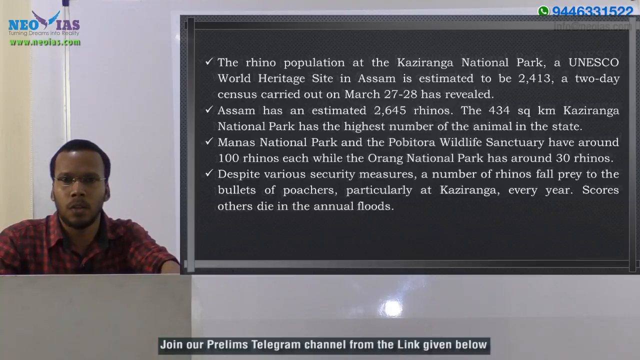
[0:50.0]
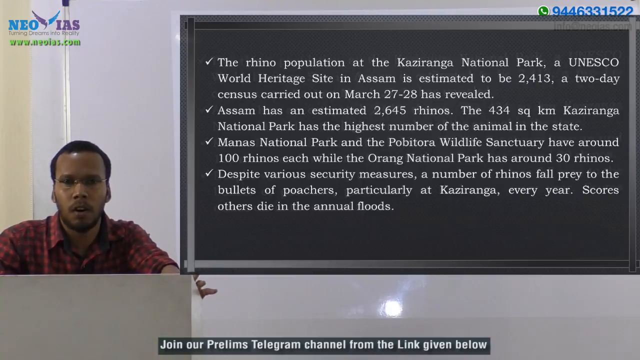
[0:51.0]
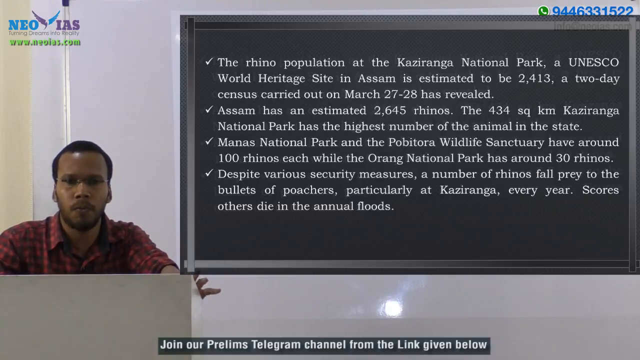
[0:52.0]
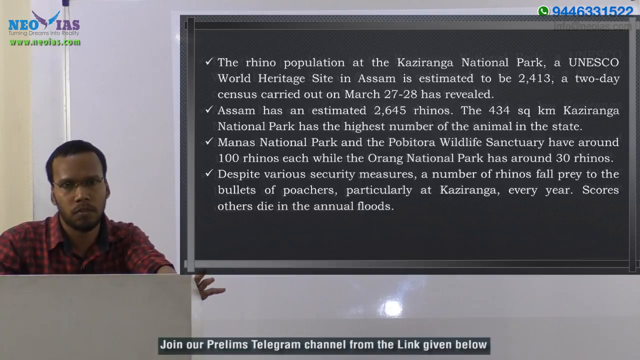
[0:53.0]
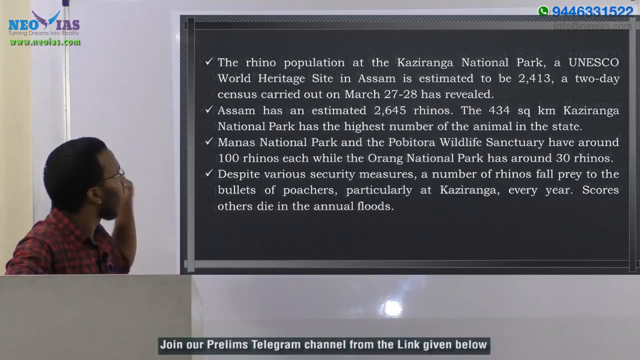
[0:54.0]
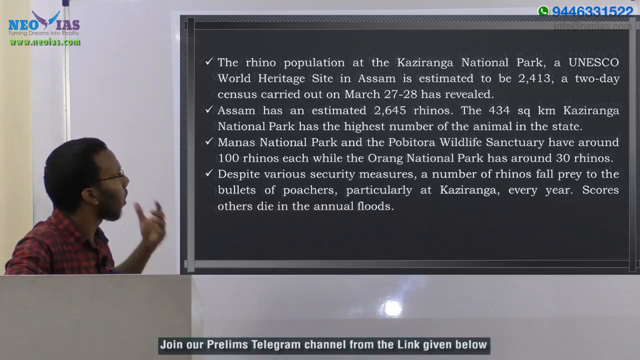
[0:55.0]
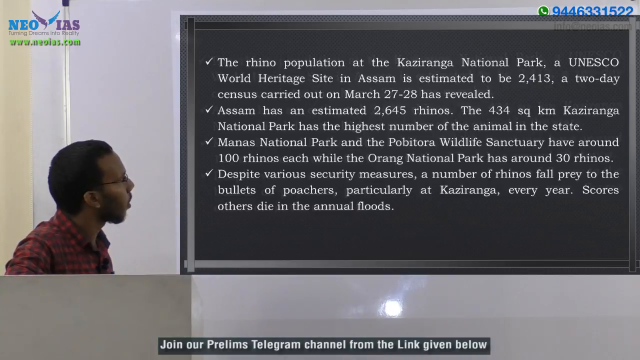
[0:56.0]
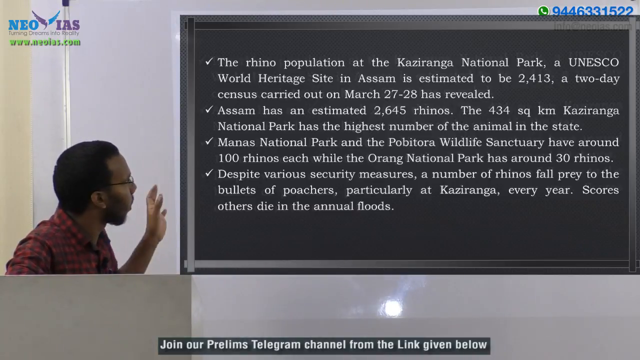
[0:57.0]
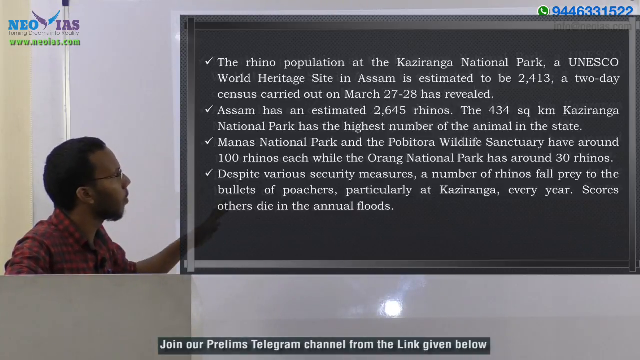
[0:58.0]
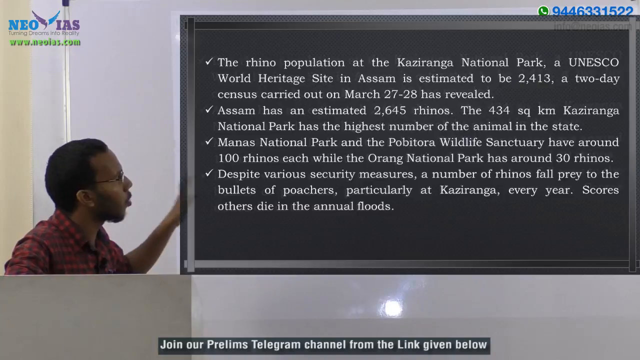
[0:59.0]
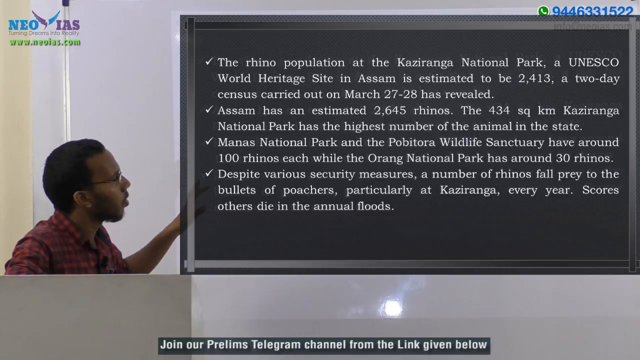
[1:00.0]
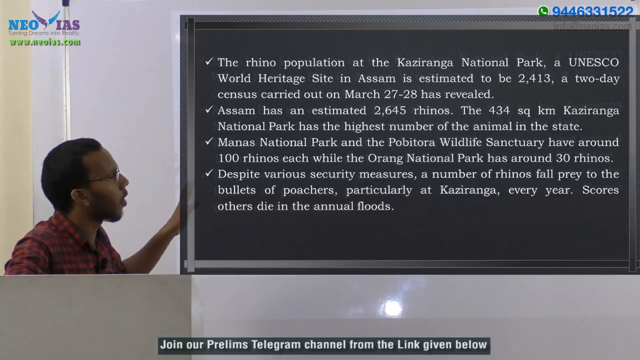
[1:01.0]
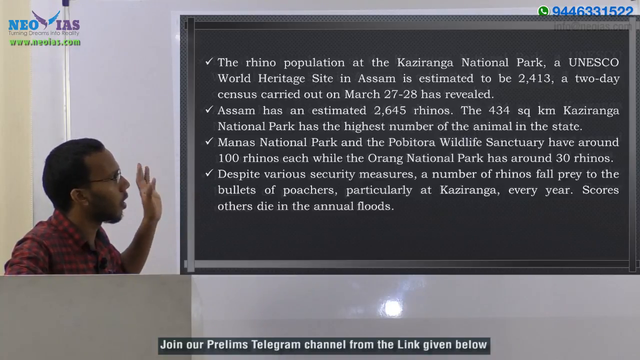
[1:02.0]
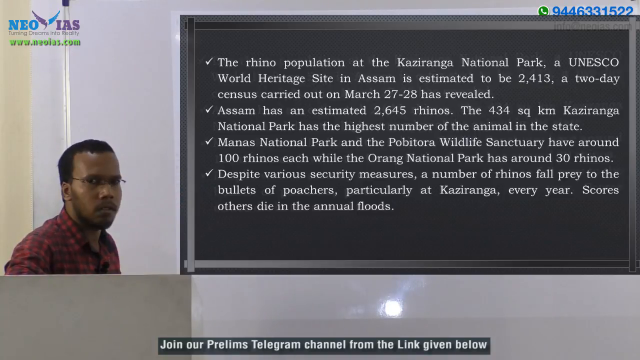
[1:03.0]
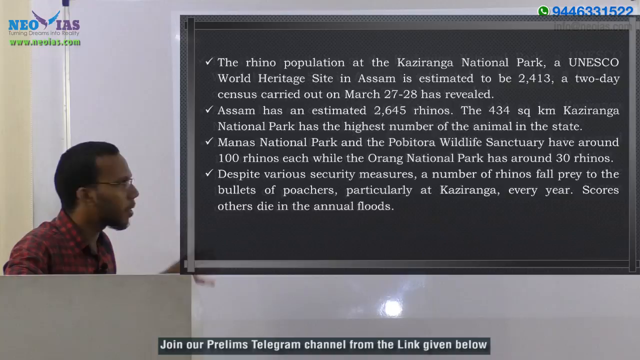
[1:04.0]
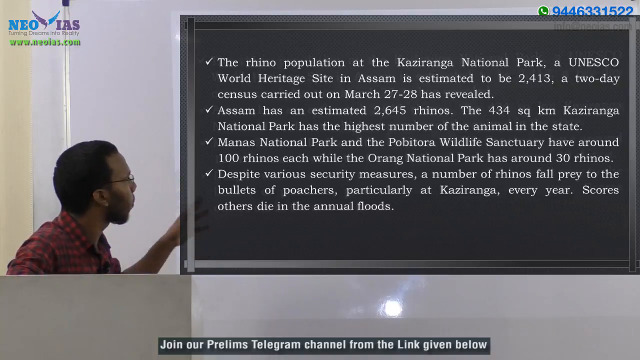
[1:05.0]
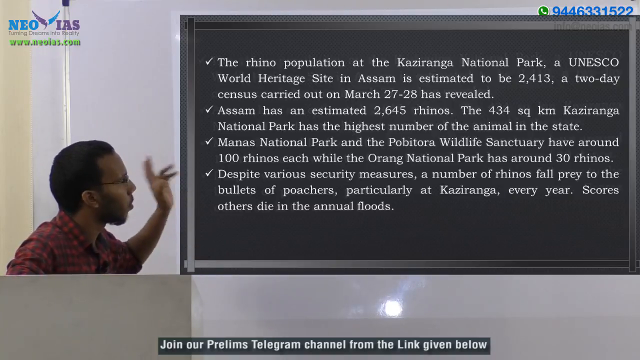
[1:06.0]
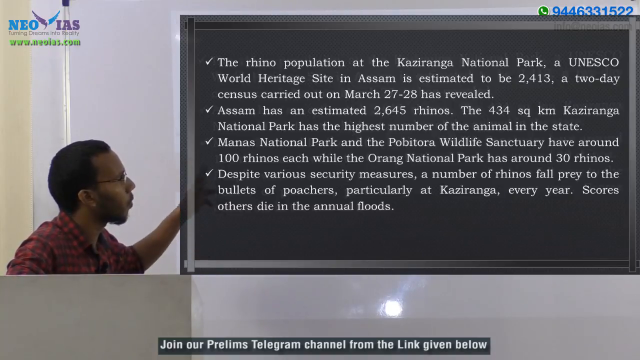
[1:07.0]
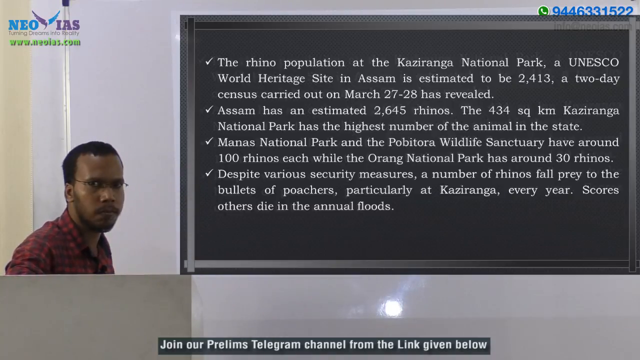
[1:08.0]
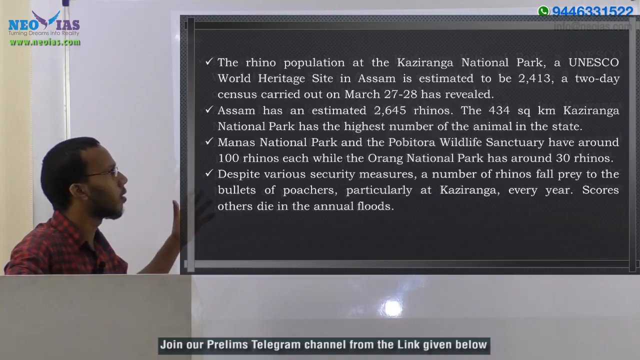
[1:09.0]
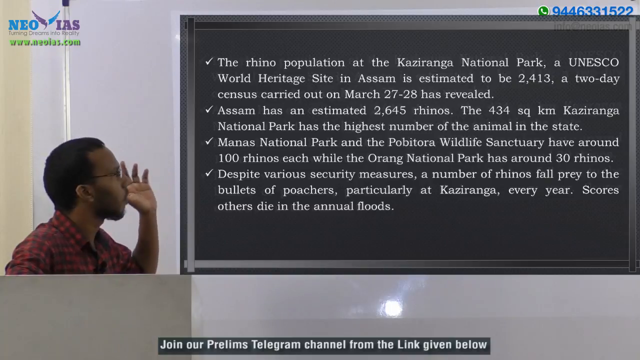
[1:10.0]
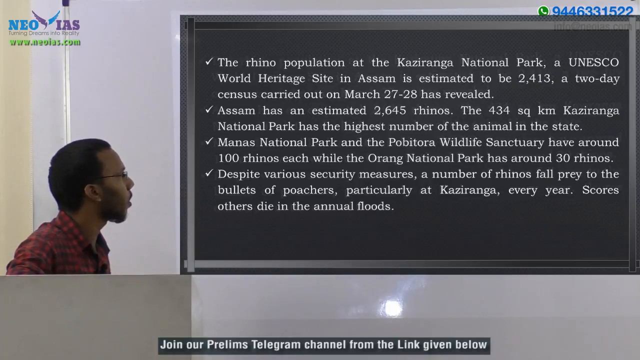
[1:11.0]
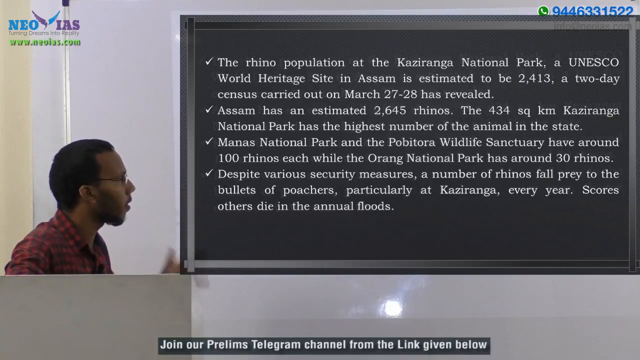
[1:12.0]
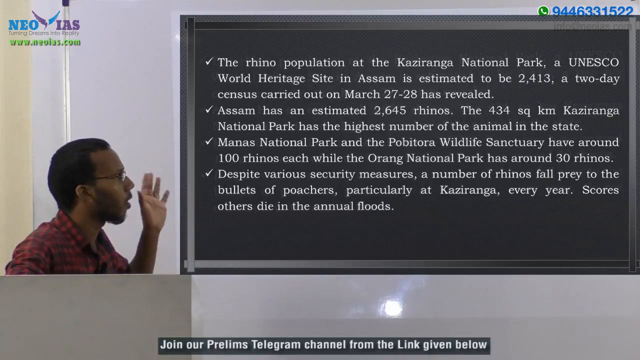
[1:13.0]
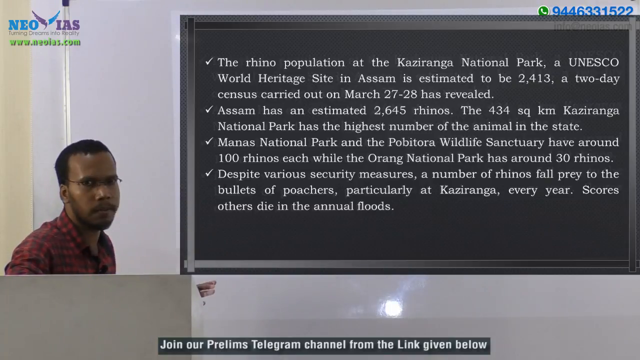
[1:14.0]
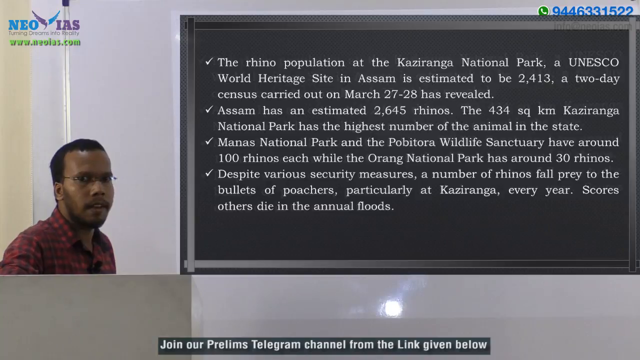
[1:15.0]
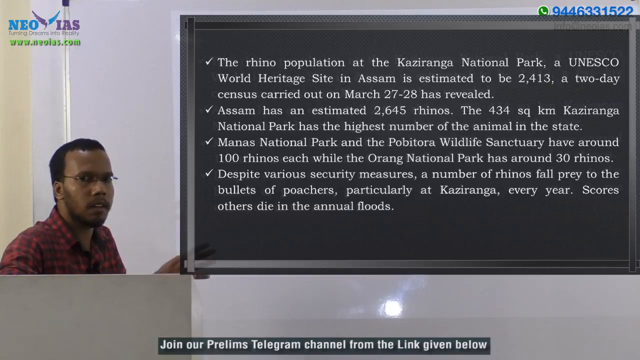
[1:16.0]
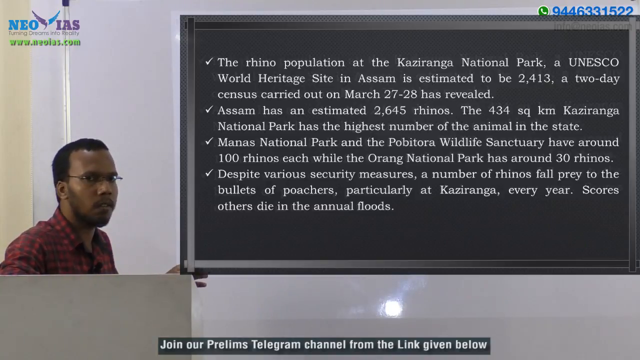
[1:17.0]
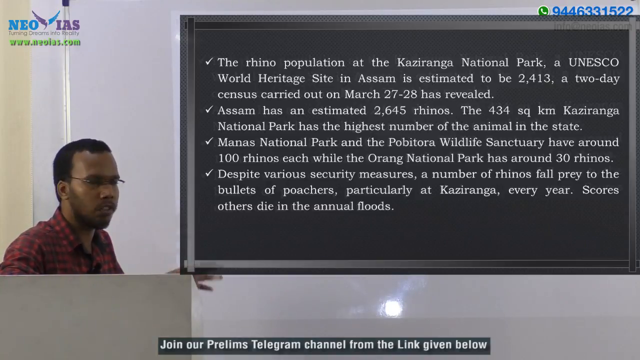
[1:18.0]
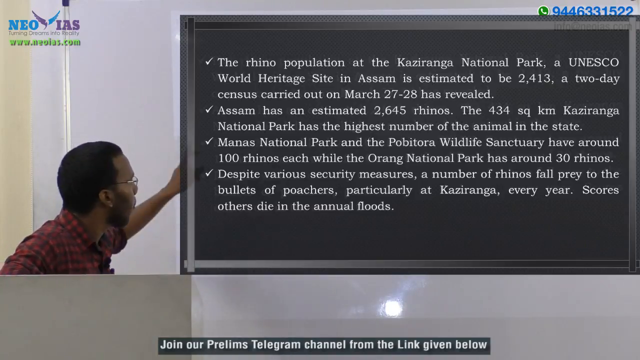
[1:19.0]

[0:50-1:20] A young black man with glasses, short curly hair and a red t-shirt is in the left corner, facing directly at the camera and looking very serious. A blackboard covers almost the entire screen with information specifically about Kaziranga National Park, UNESCO World Heritage Sites, and a lot of information, apparently from wildfire surveys. He talks directly to the camera, sharing points, then faces the wall. He seems to be in a classroom. The blackboard looks superimposed, and behind it there appears to be something like a whiteboard that he reads the information from. Now and then he faces the camera, then turns back to the wall where the board is, reading points and keeps talking, then faces the camera again. In the top right corner there is a phone number, 944-633-1522, and a WhatsApp icon. In the other corner there is a logo that says something like Neil Diaz, along with a small, unreadable website.